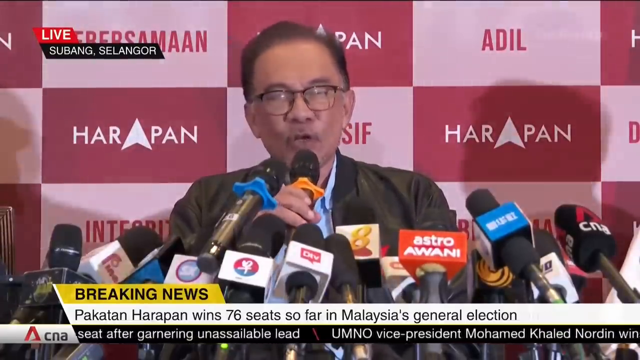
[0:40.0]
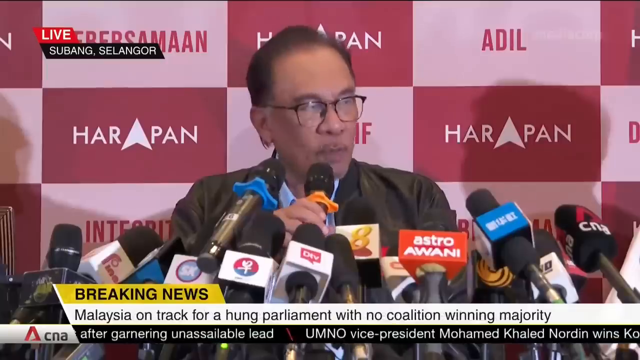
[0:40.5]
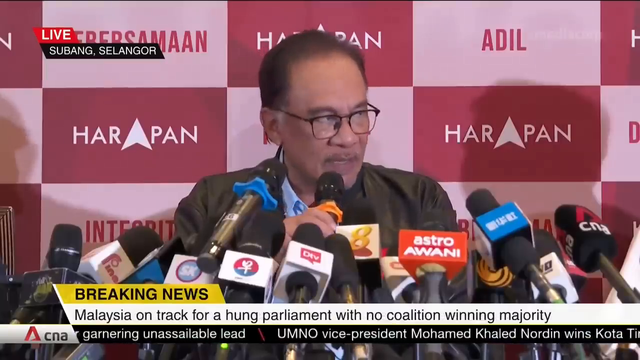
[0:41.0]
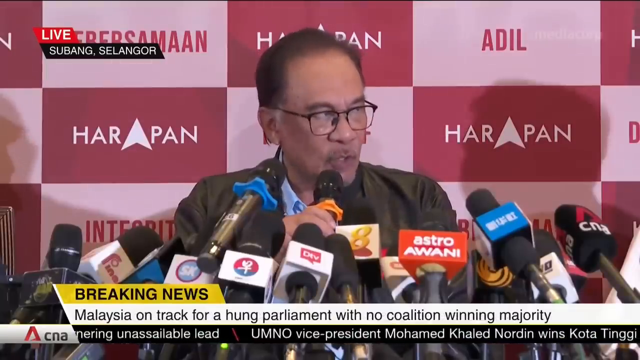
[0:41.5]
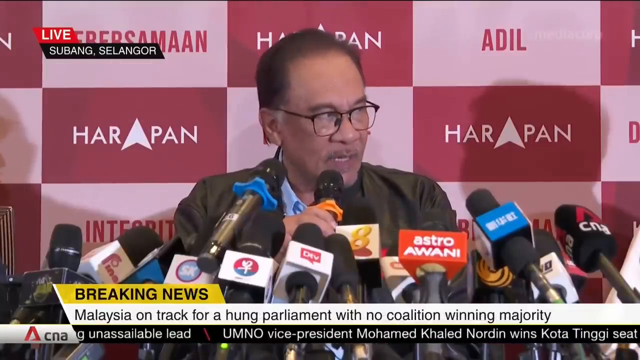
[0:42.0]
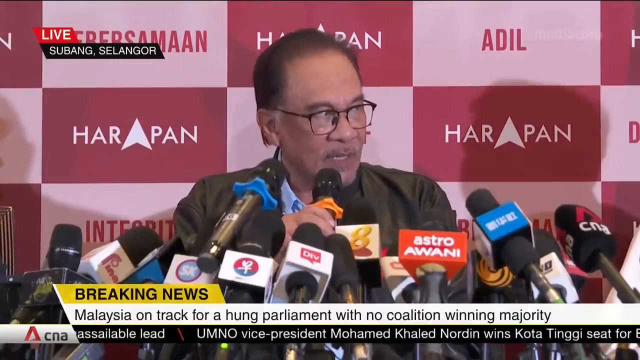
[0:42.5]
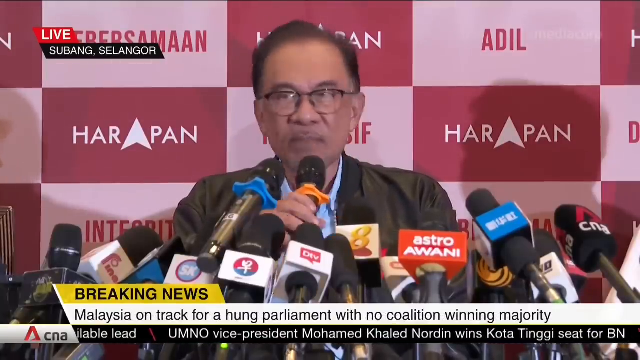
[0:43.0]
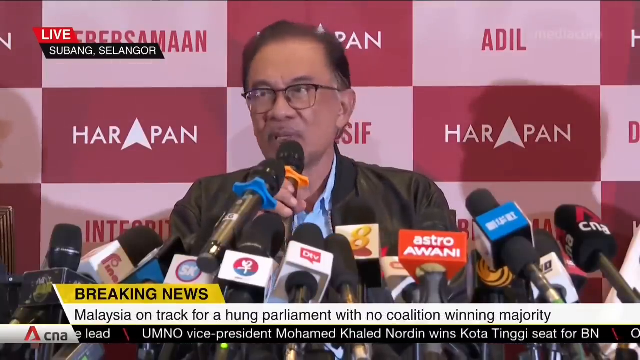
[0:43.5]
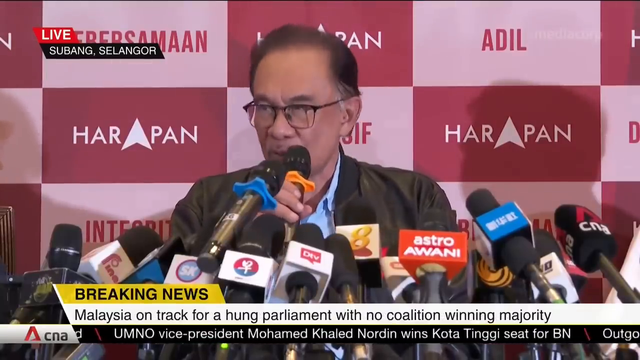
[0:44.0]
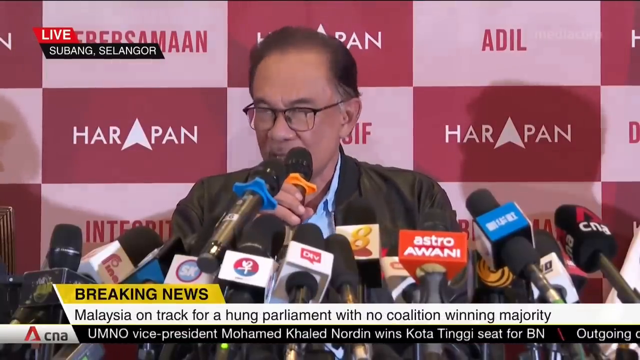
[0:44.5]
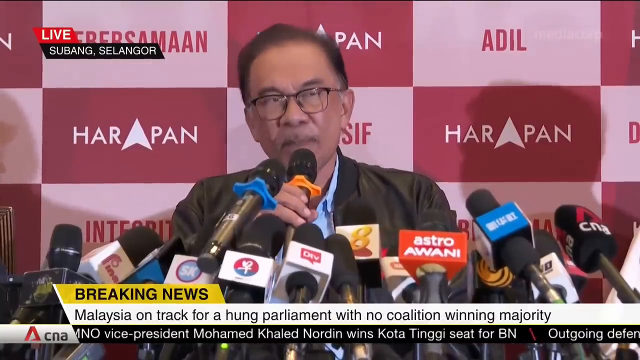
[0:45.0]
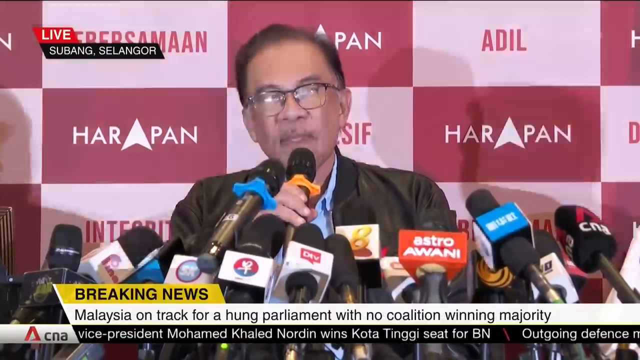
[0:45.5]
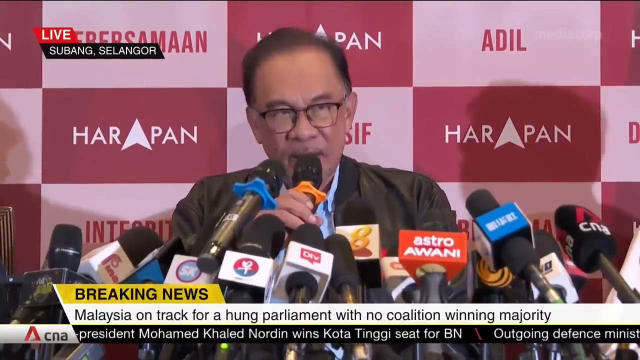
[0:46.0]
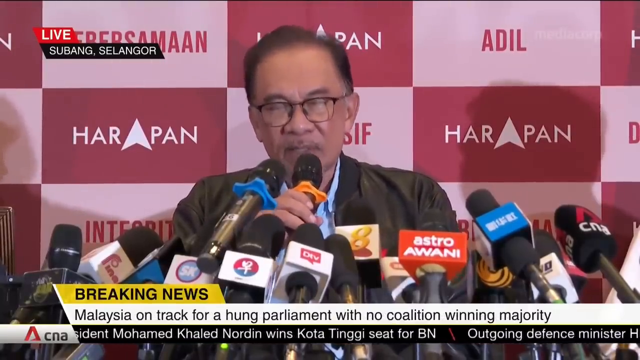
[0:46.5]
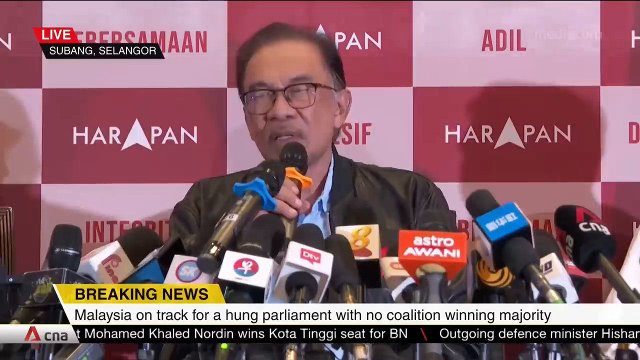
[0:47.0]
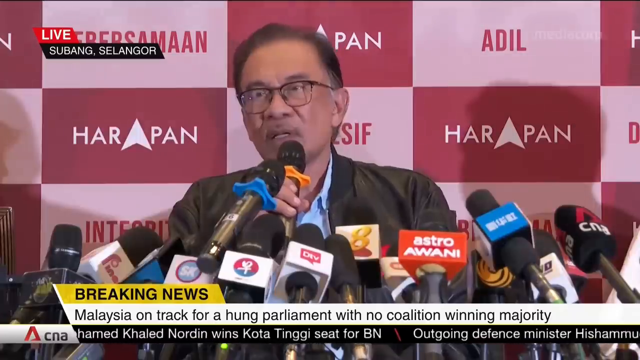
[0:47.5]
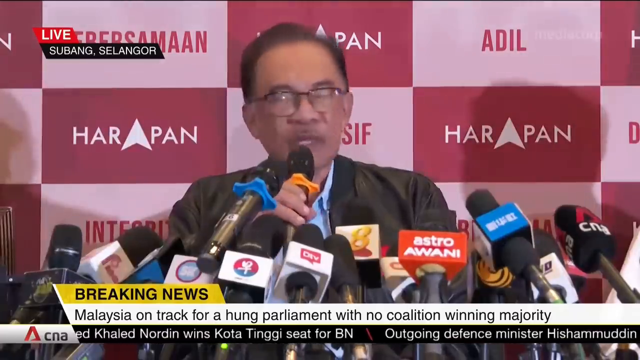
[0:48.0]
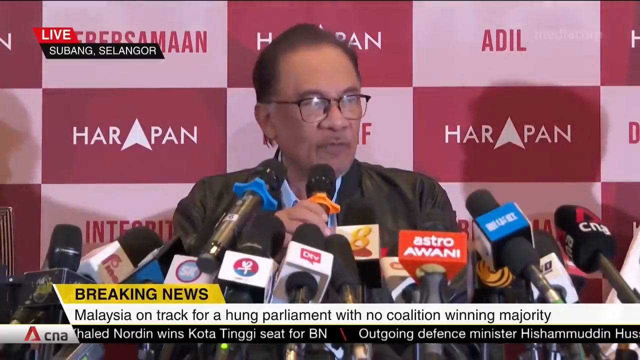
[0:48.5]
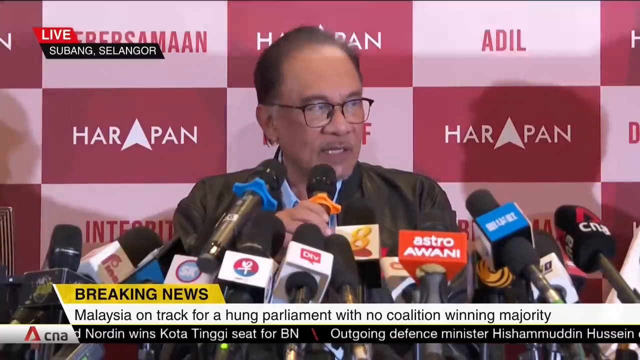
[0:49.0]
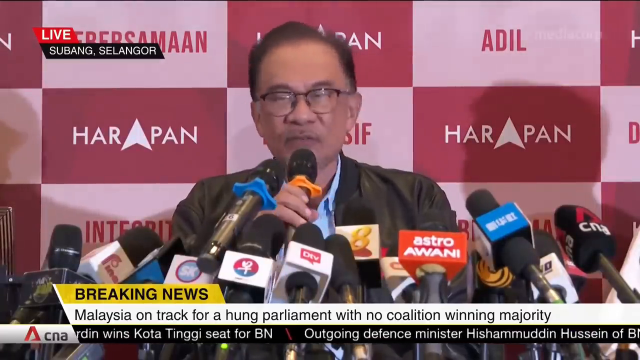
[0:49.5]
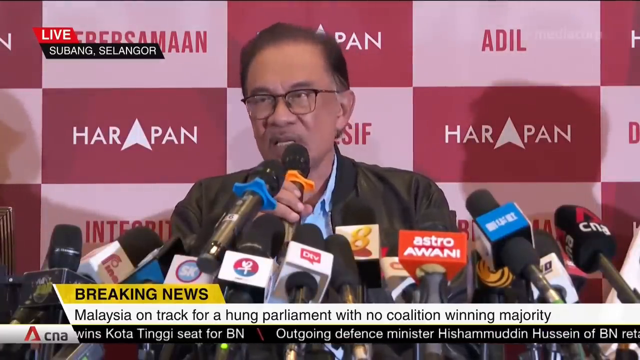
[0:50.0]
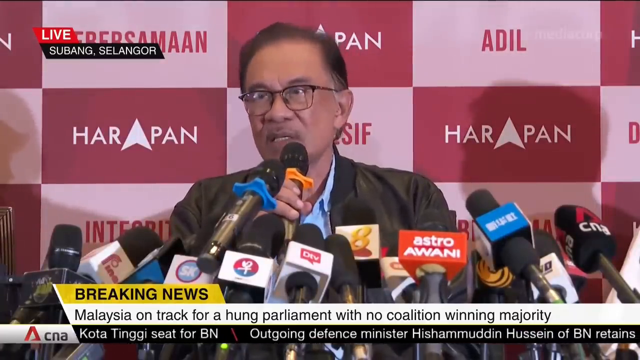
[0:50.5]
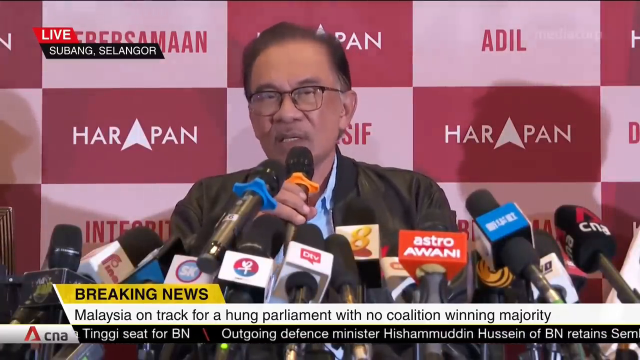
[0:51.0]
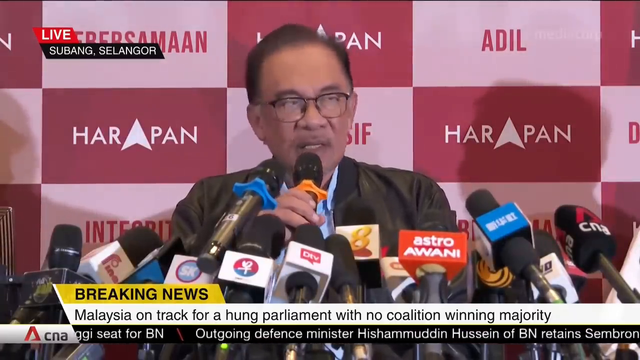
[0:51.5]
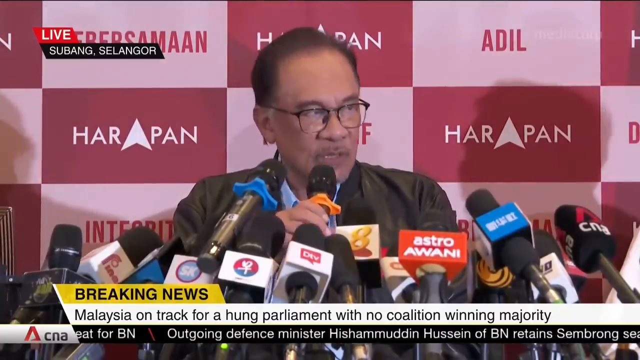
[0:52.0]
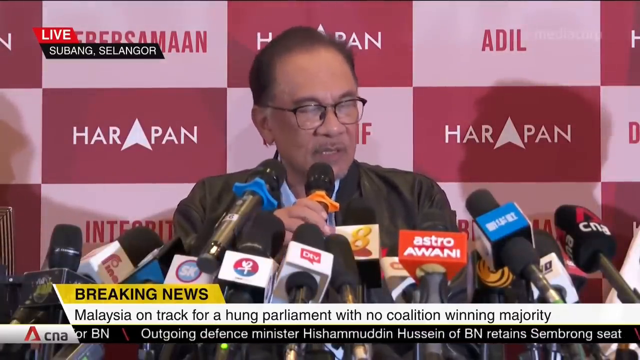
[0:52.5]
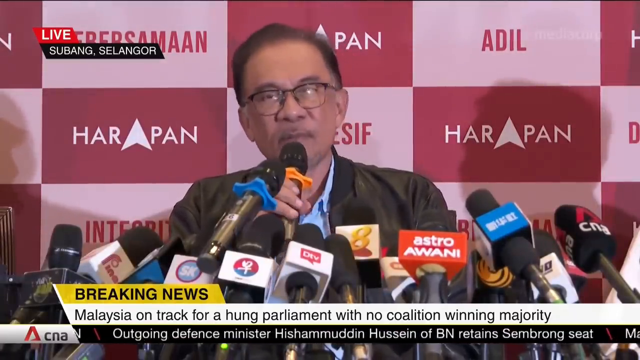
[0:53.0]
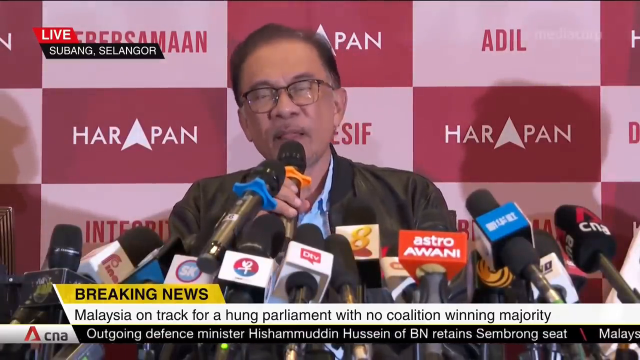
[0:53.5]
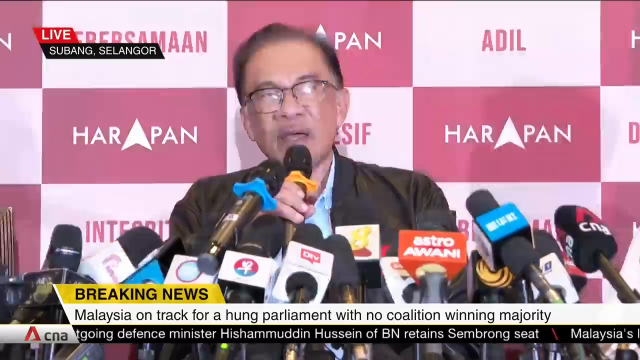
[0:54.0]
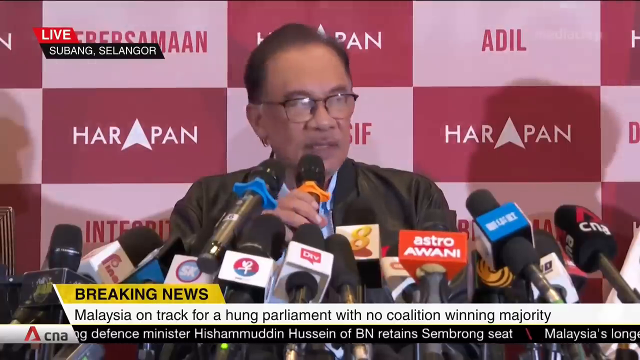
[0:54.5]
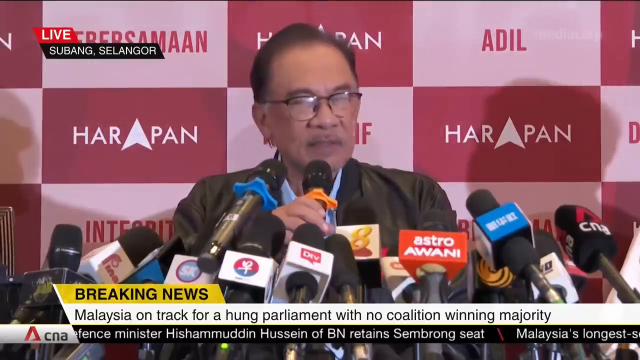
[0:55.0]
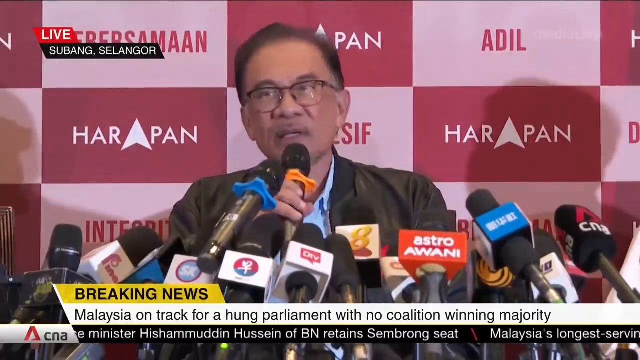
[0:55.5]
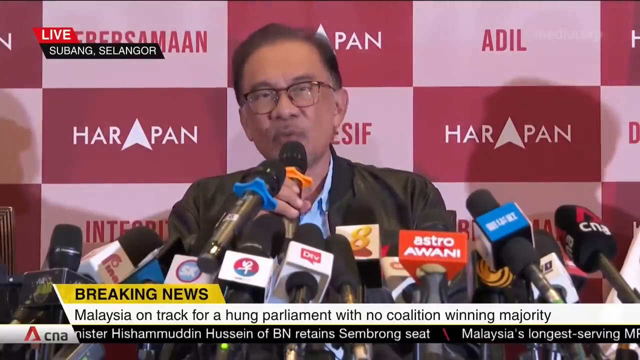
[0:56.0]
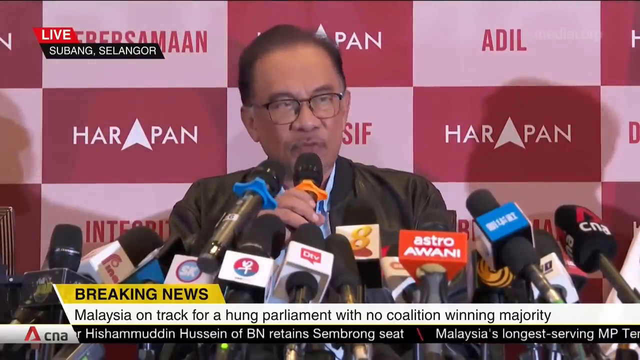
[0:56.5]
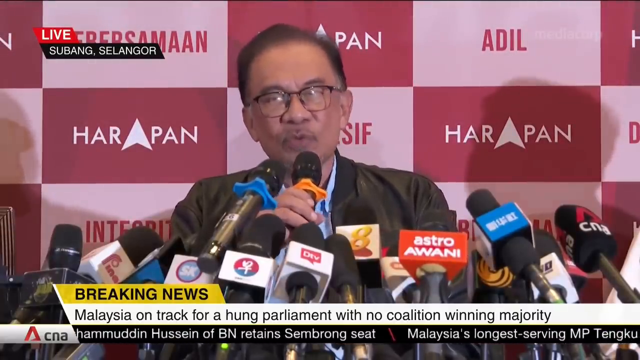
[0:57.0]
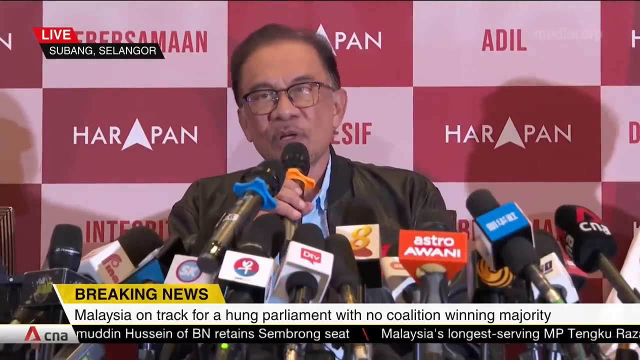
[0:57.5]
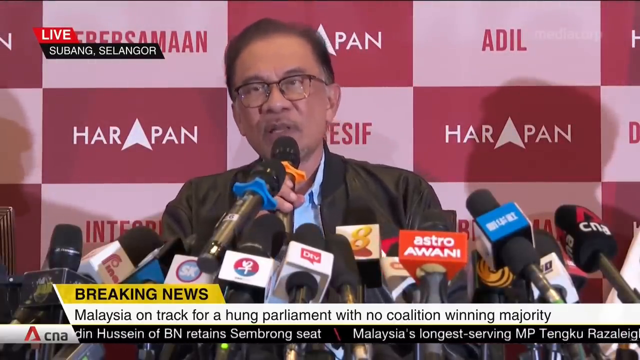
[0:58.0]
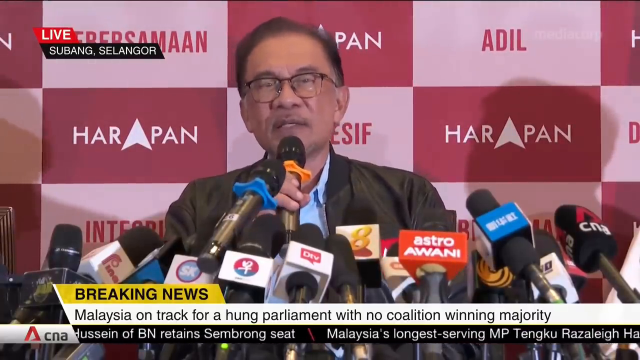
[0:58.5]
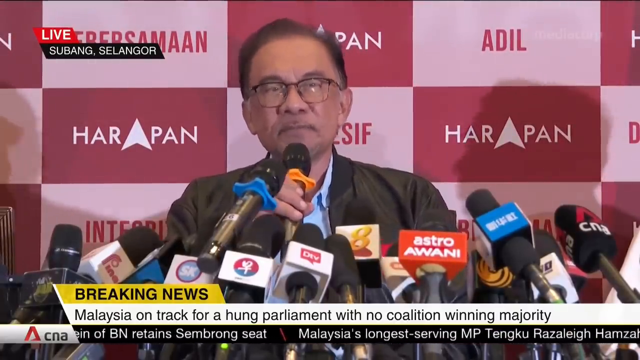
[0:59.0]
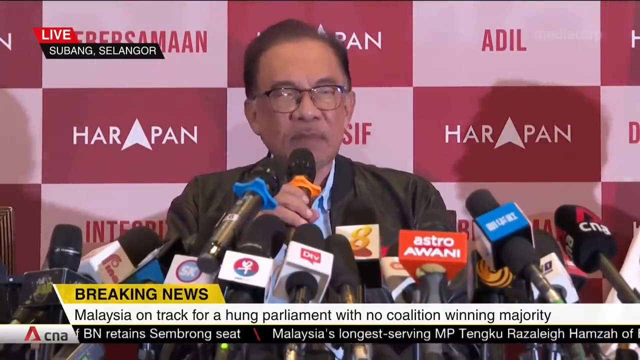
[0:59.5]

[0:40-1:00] The breaking news coverage continues with the gentleman speaking in front of ten or twelve different newscast microphones. On screen it reads "Live" from Subang Selangor, with a breaking news banner: "Malaysia on track for a hung parliament with no coalition winning majority." Various news items scroll along the bottom, including one beginning "outgoing defense minister Hussein of BN retains." Camera flashes go off as he speaks. Text also reads "Pakatan Harapan wins 76 seats so far in Malaysia's general election."